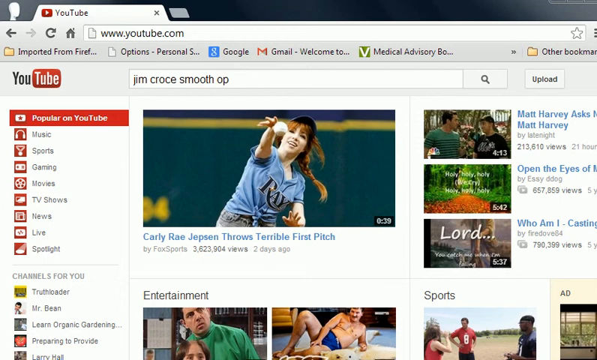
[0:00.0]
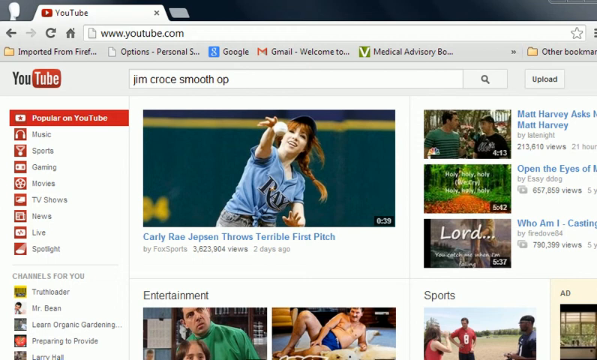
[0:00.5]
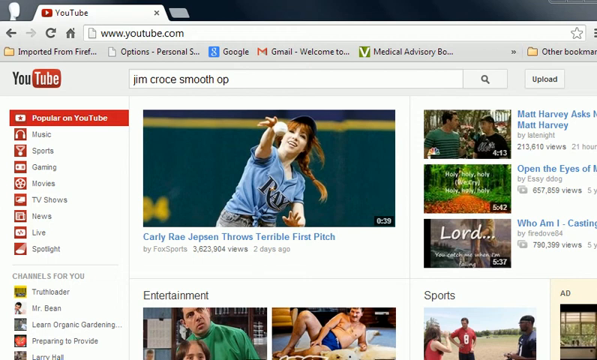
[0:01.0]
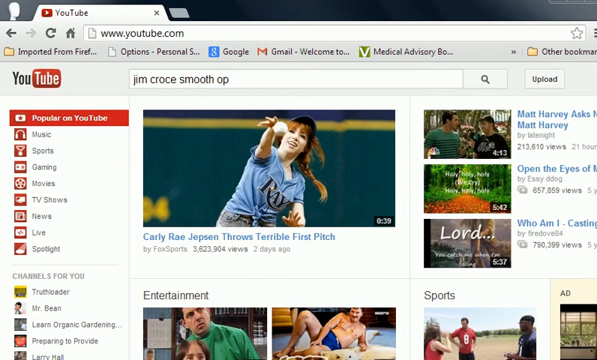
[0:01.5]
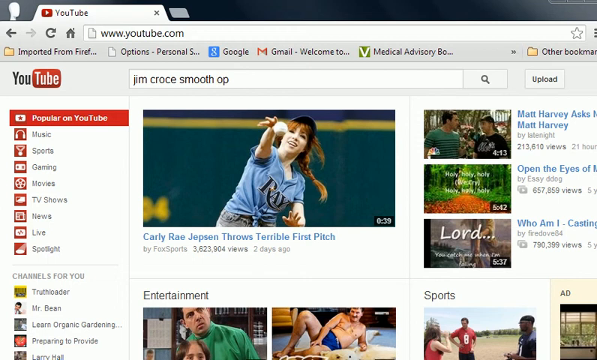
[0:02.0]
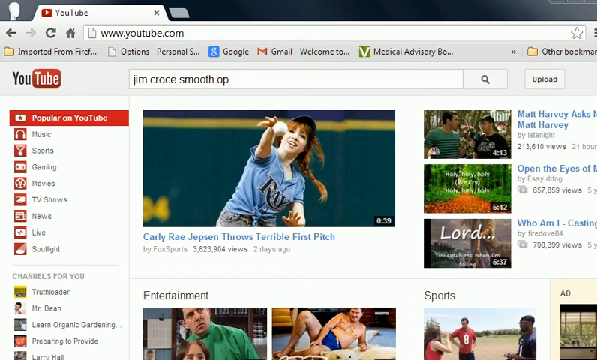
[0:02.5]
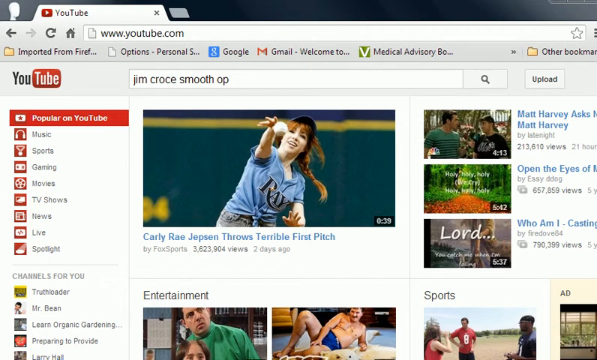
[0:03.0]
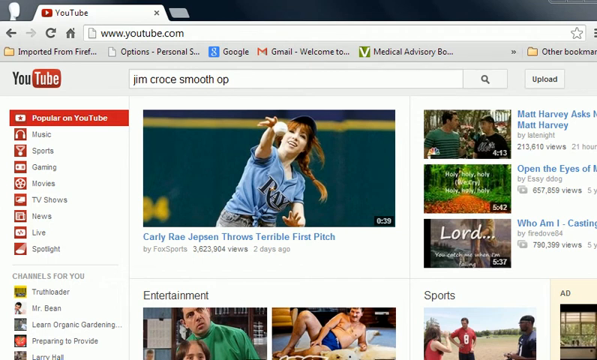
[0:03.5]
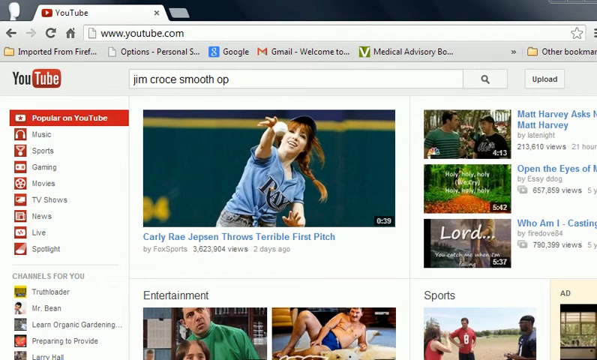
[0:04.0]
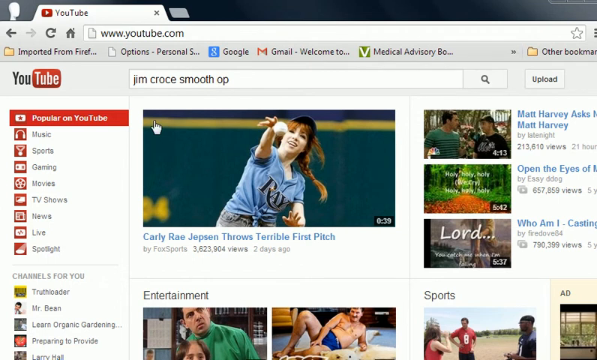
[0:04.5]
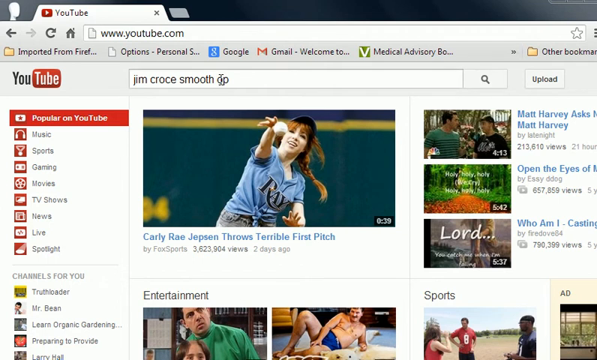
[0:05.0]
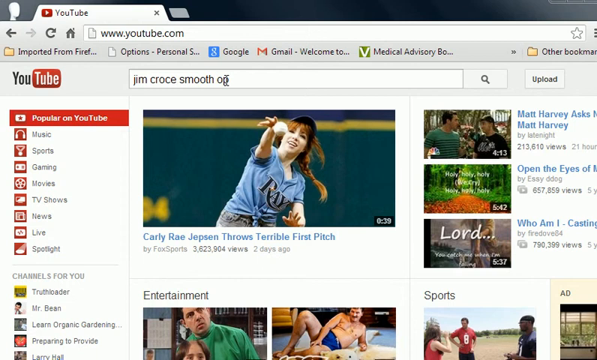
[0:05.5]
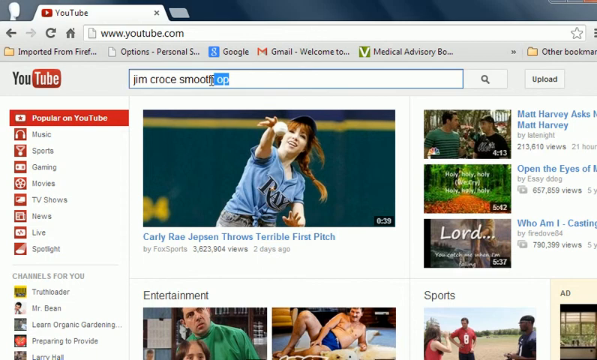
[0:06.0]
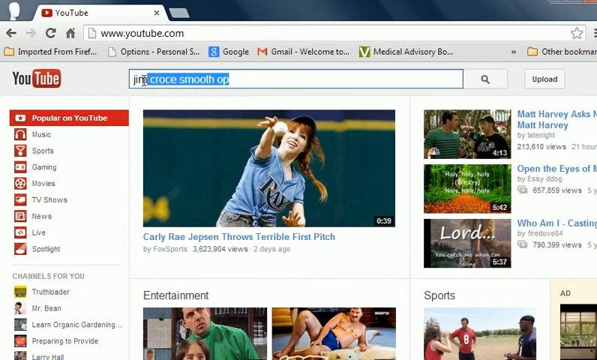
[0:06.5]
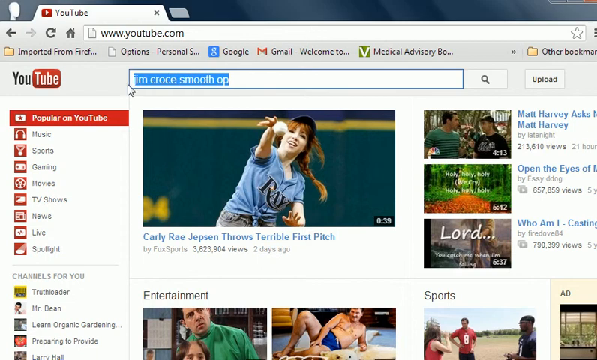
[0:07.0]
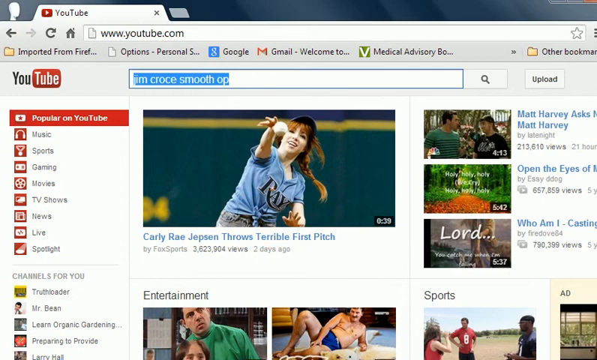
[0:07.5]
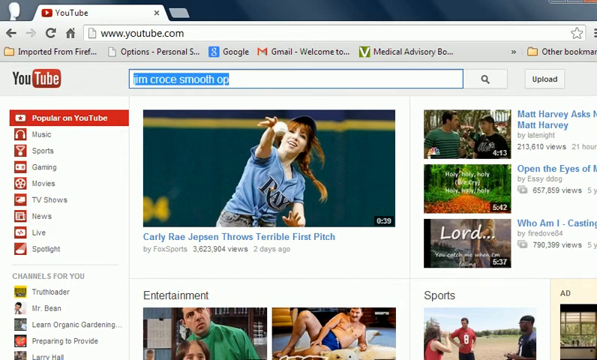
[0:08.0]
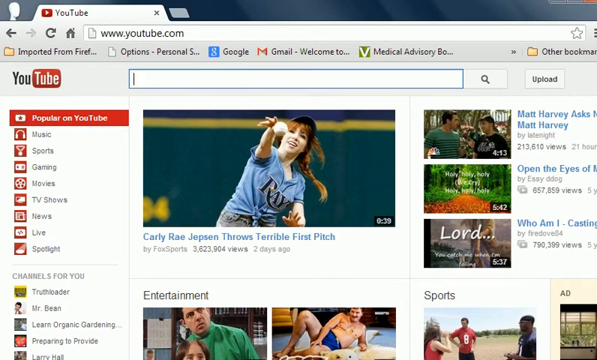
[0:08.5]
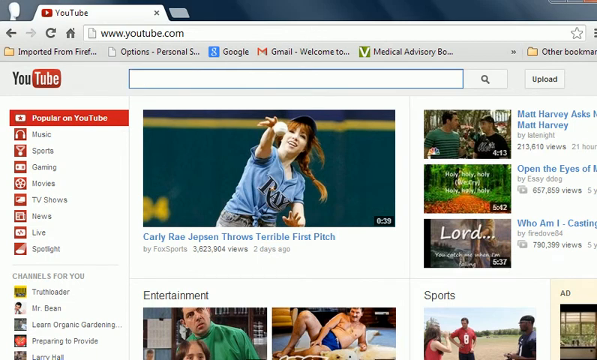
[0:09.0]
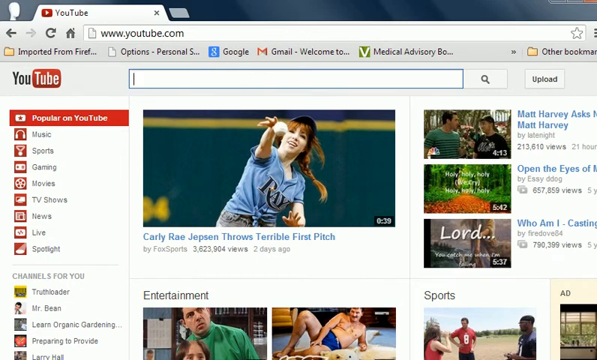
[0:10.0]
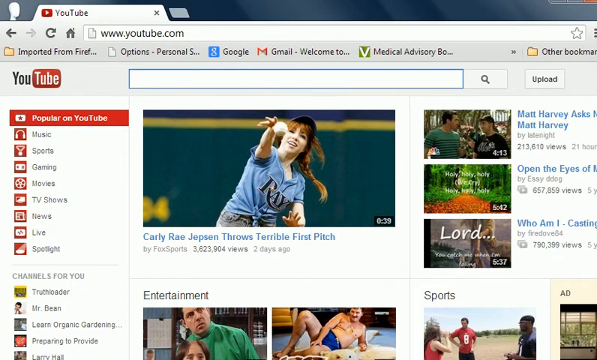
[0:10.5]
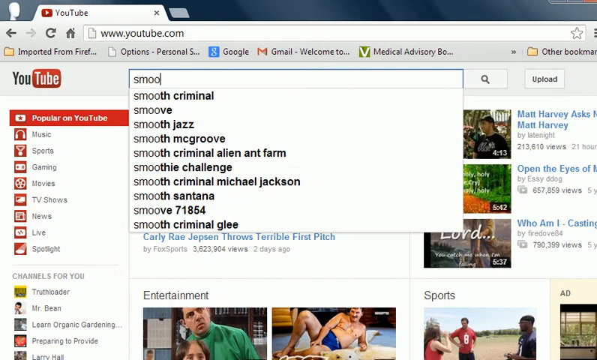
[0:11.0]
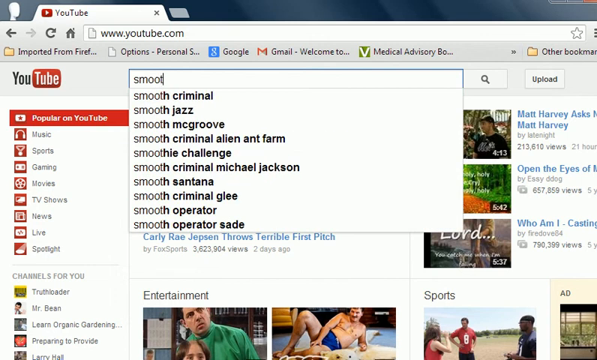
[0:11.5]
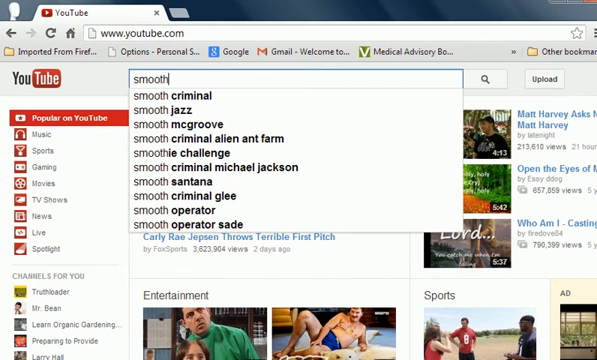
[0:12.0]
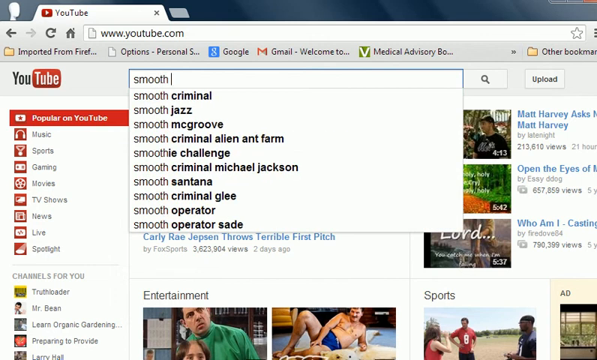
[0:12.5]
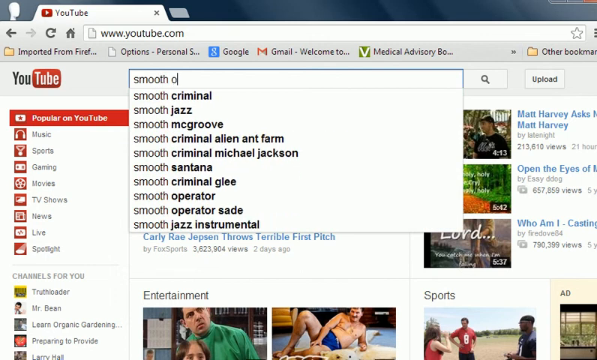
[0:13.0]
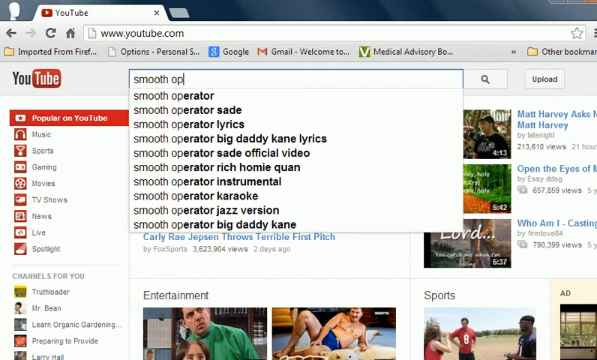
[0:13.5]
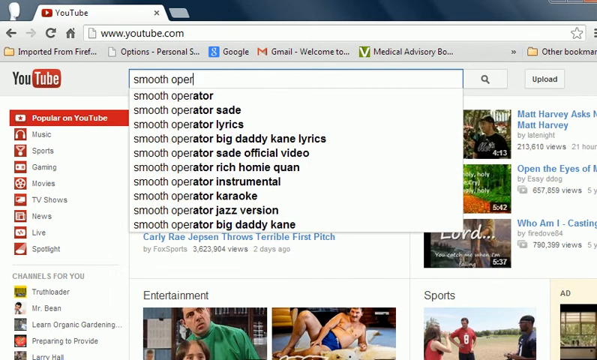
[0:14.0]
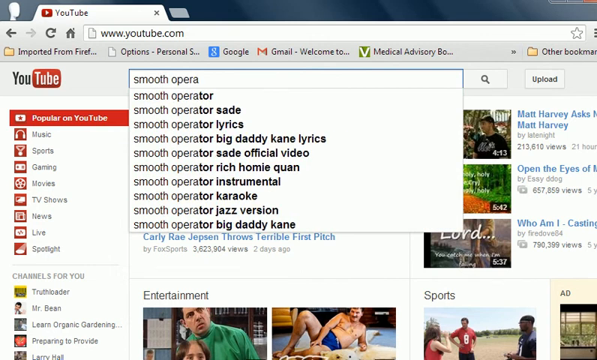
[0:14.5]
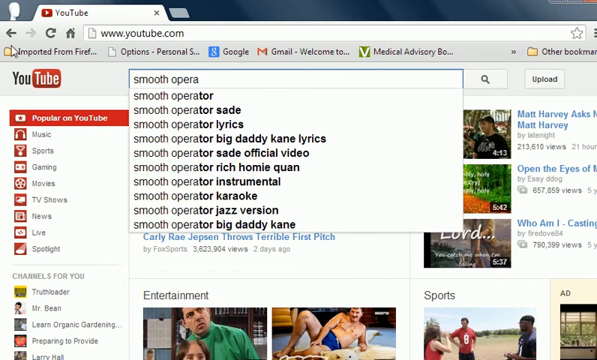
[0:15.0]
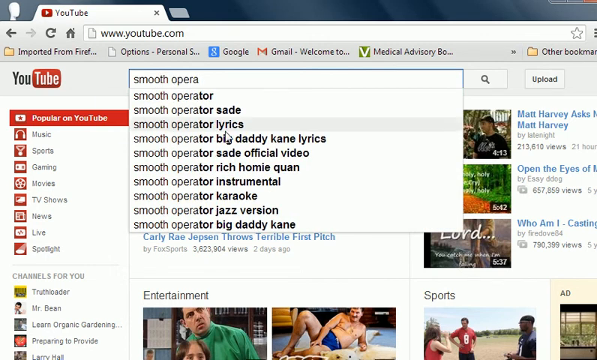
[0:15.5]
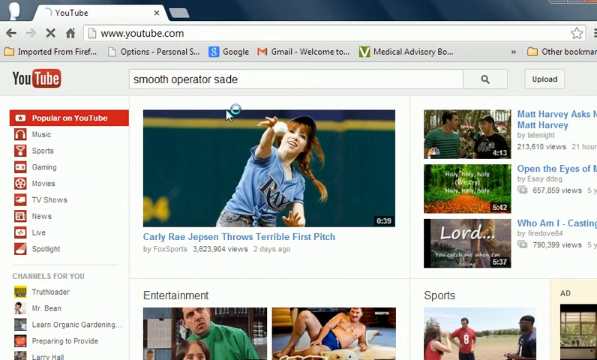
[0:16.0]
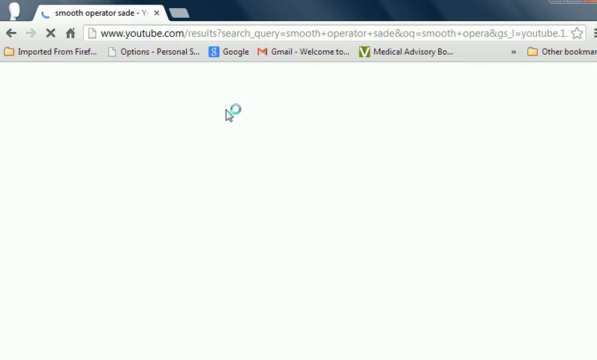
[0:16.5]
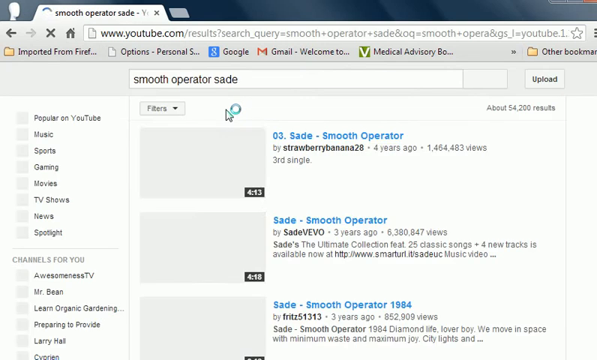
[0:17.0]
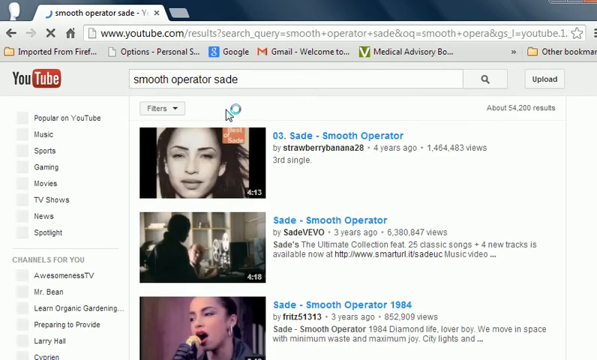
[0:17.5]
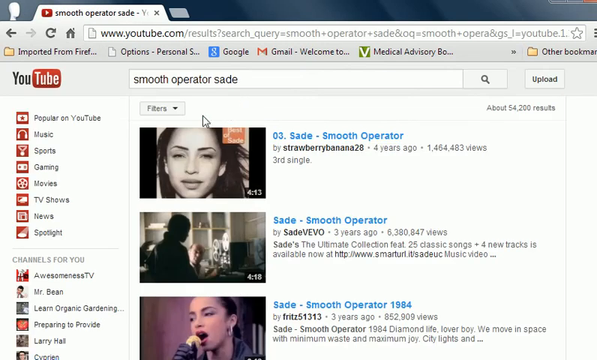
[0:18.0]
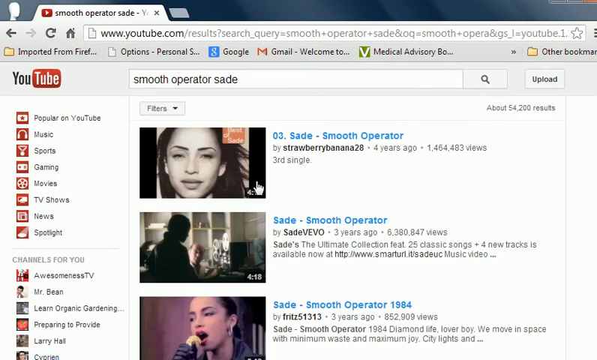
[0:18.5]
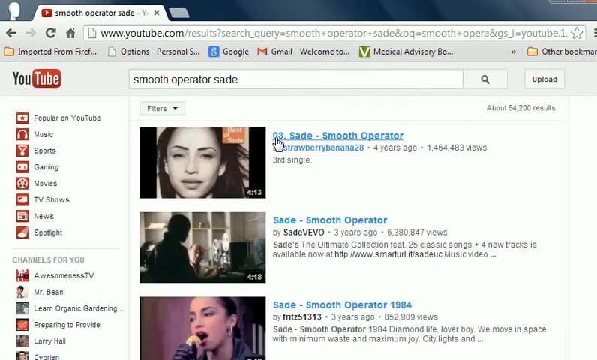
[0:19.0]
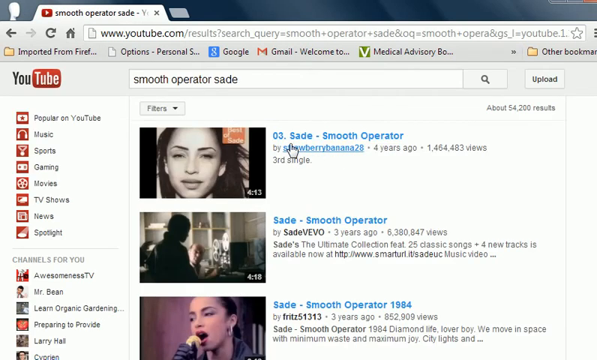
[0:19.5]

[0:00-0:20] An old version of the YouTube website is shown. The search bar at the top reads "jim croce smooth op." In the center is a video titled "Carly Rae Jepsen Throws Terrible First Pitch," in which a girl in a blue "RAYS" jersey throws a baseball with her right hand. The white mouse pointer highlights "jim croce smooth op" from right to left, the text is deleted, and "smooth opera" is typed. Several suggestions populate the drop-down list, and "smooth operator sade" is selected. Three results appear. The white mouse pointer selects the first result, "03. Sade - Smooth Operator," a video by a user called strawberrybanana28, posted 4 years ago, with 1,464,483 views and the description "3rd single." The other two videos are titled "Sade - Smooth Operator" and "Sade - Smooth Operator 1984."